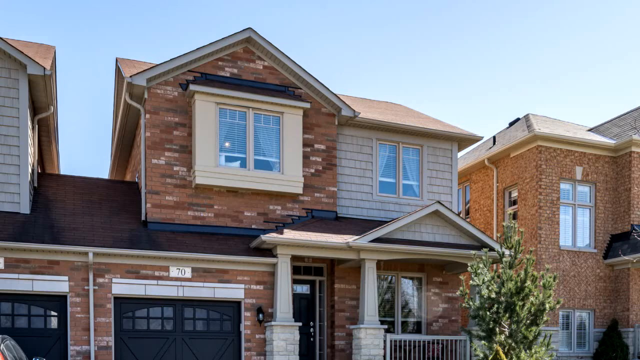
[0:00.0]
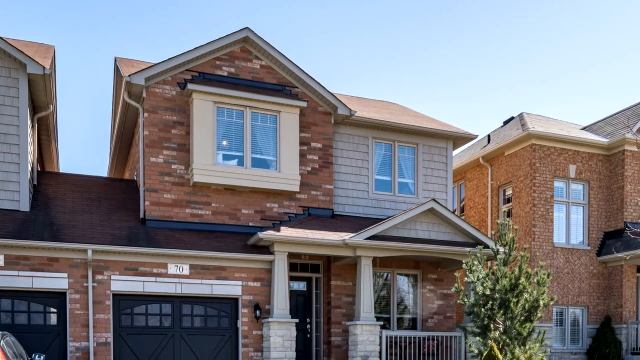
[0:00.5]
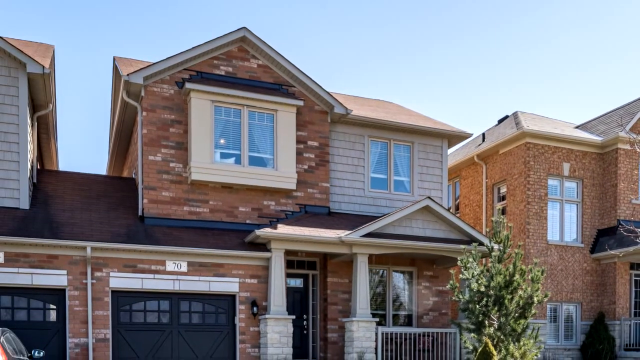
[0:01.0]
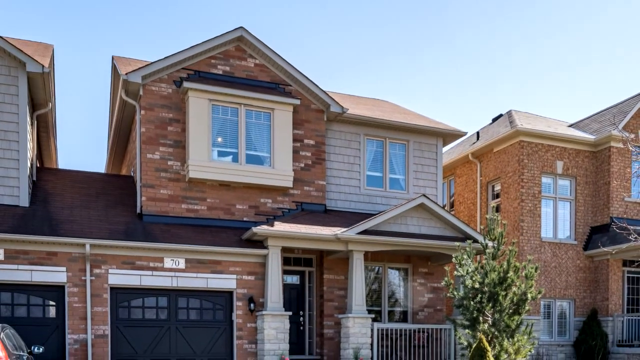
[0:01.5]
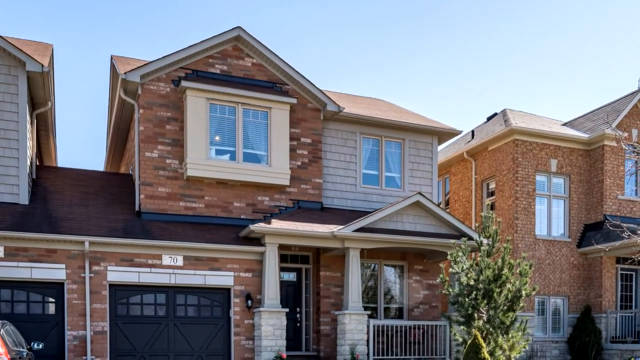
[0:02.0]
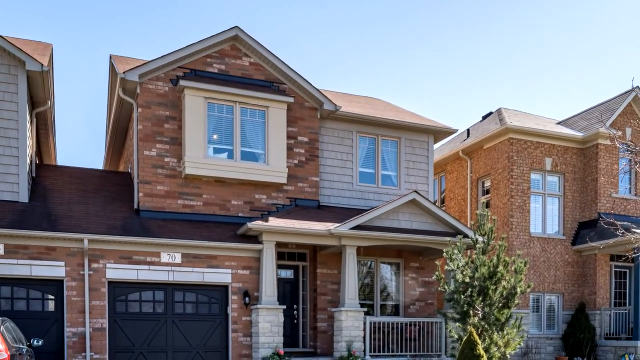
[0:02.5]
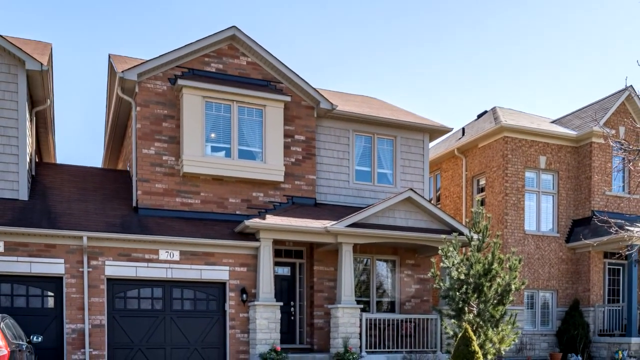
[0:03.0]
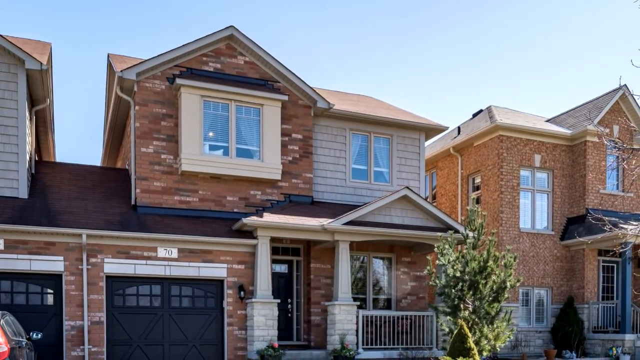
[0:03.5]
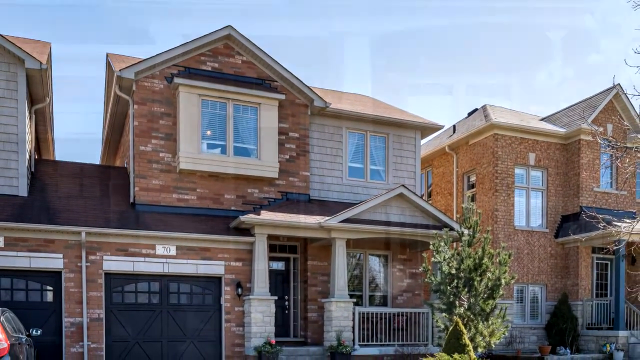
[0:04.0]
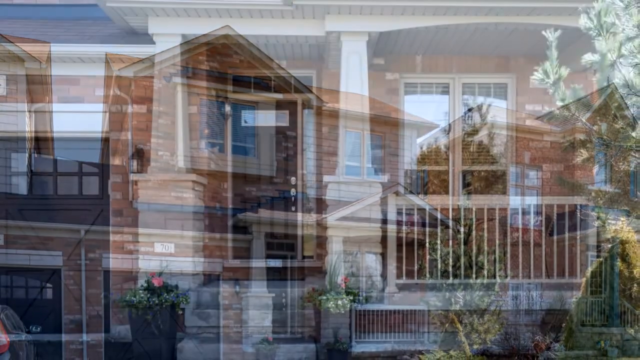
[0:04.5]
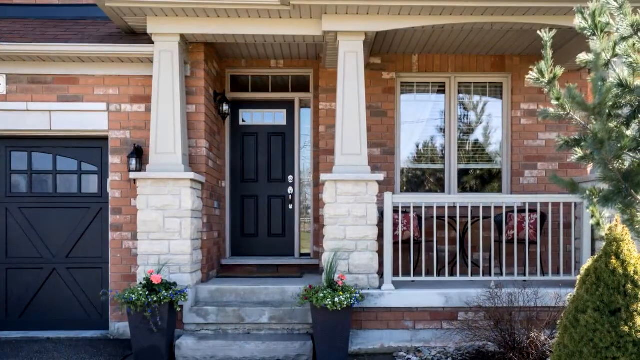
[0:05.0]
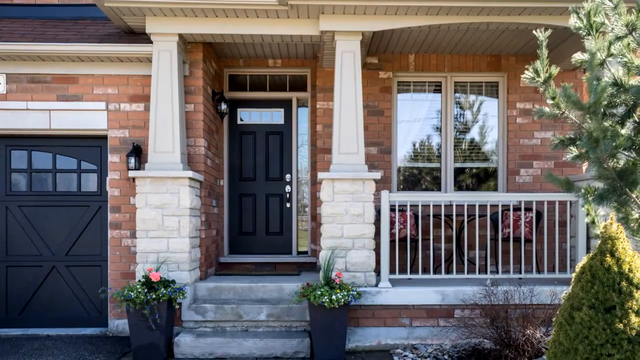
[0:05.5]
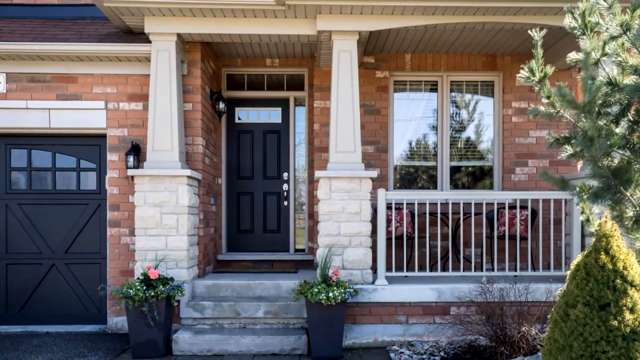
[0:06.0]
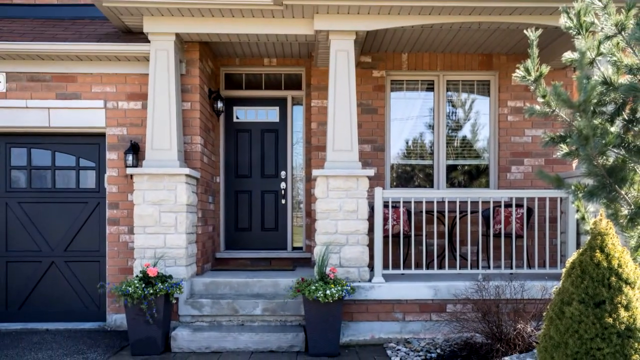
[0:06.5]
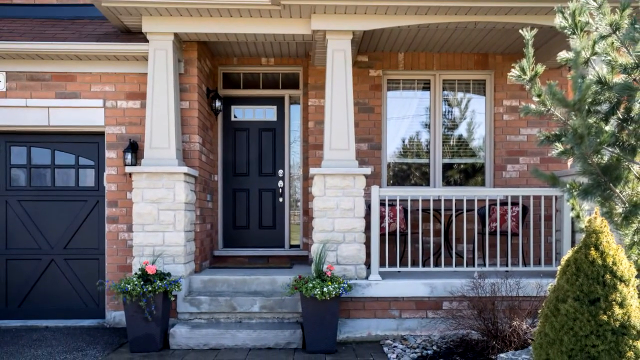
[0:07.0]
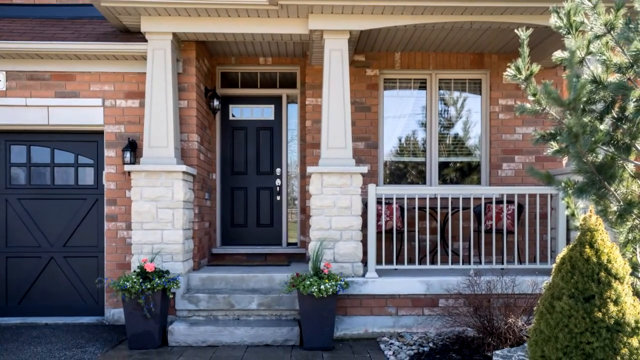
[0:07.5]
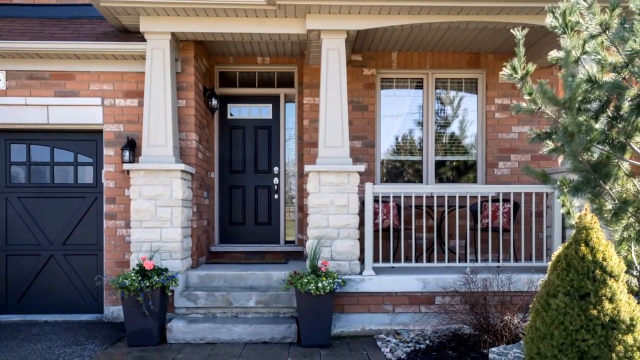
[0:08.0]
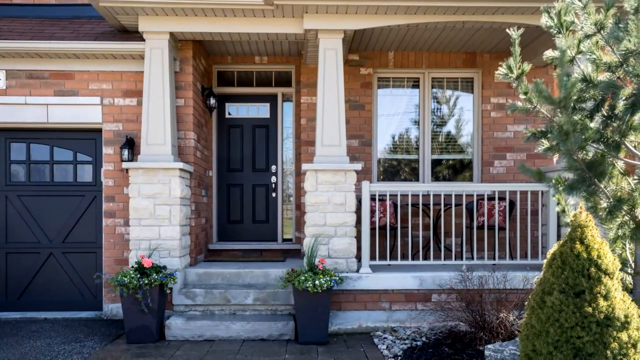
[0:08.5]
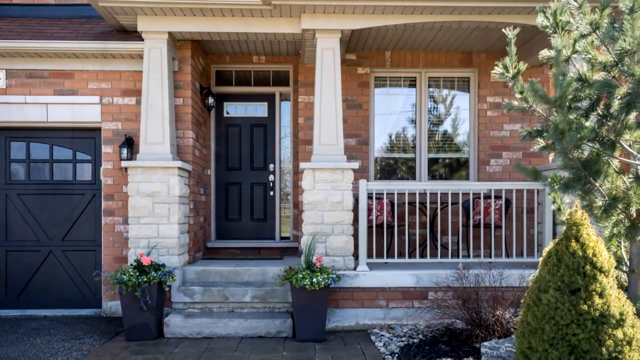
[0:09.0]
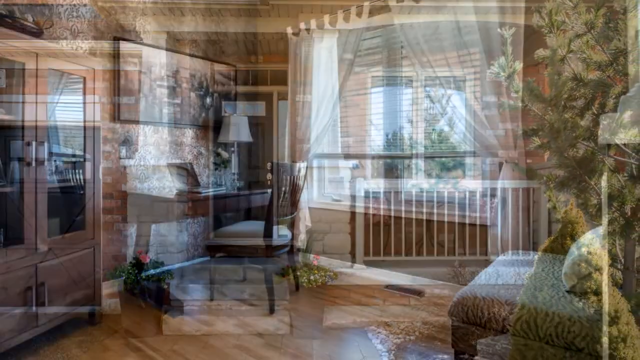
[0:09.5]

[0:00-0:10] The video opens on a suburban neighborhood with two houses as the main focus. The houses are built of bricks and wooden panels, and each is two stories tall with a double garage. Each house has trees and bushes out front. A transition leads to a close-up view of one of the houses, focused on its front porch, which is supported by two large stone columns that lead to a black door. The video is made of still images with motion added, panning from one side of the house to the other.